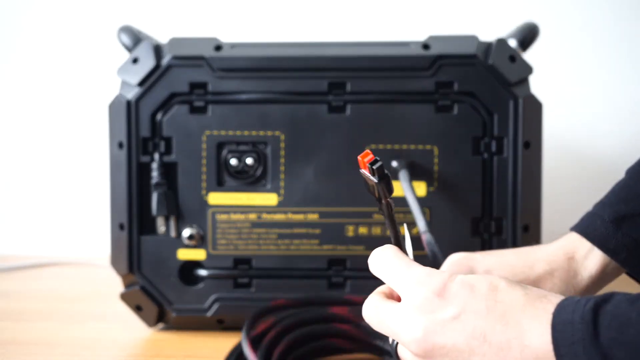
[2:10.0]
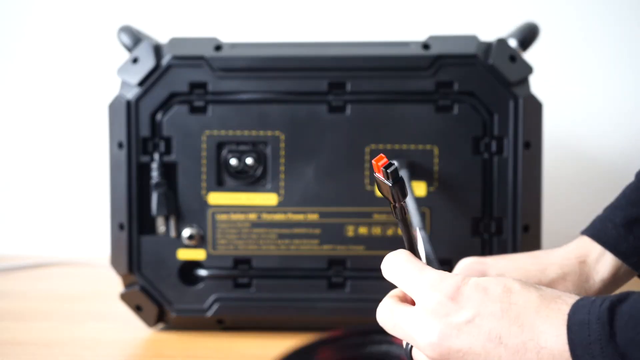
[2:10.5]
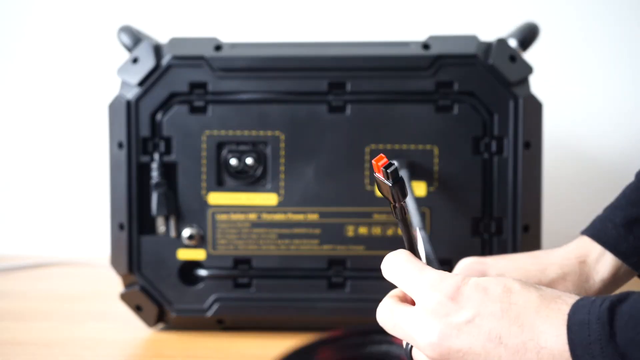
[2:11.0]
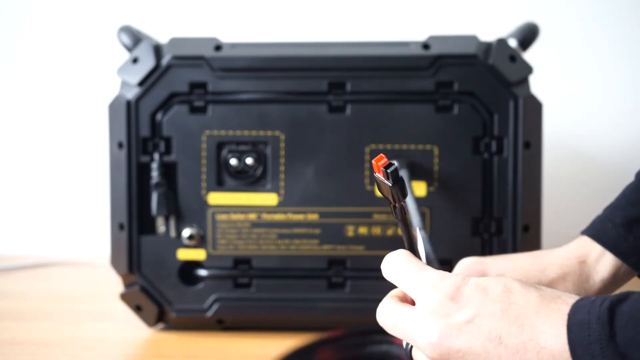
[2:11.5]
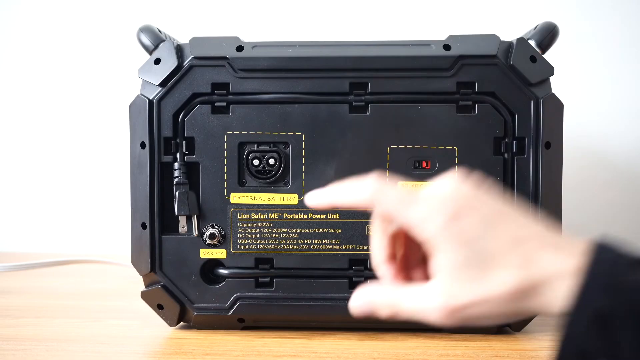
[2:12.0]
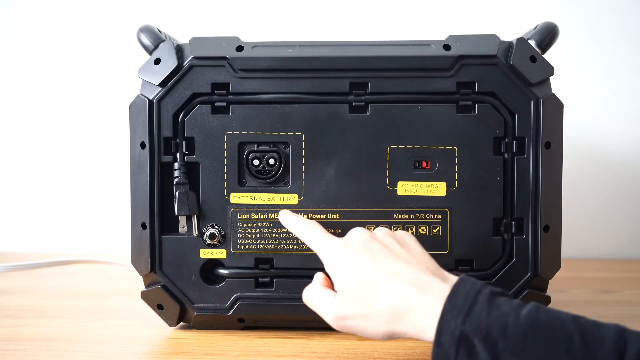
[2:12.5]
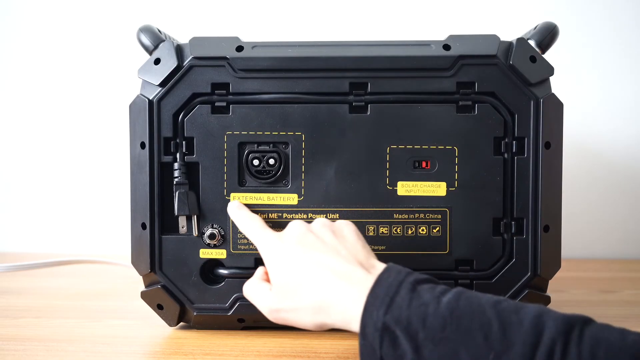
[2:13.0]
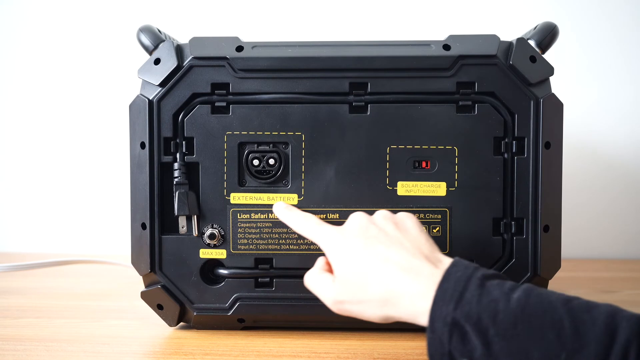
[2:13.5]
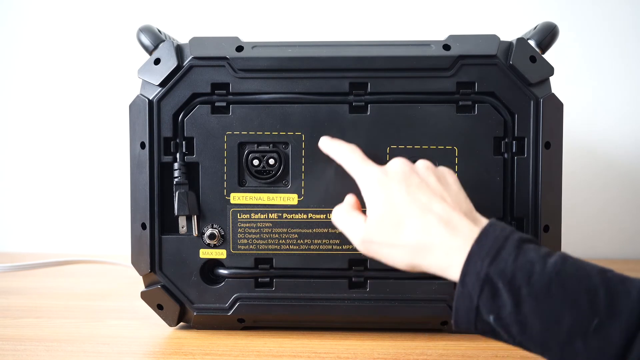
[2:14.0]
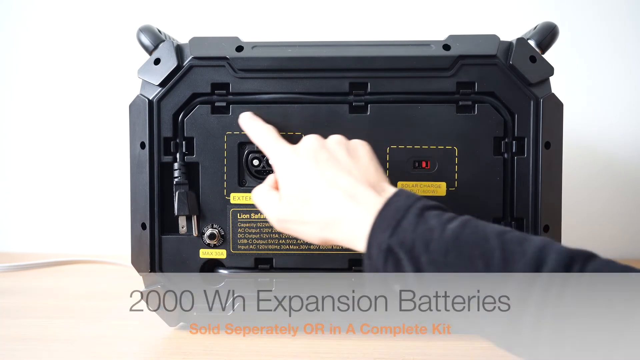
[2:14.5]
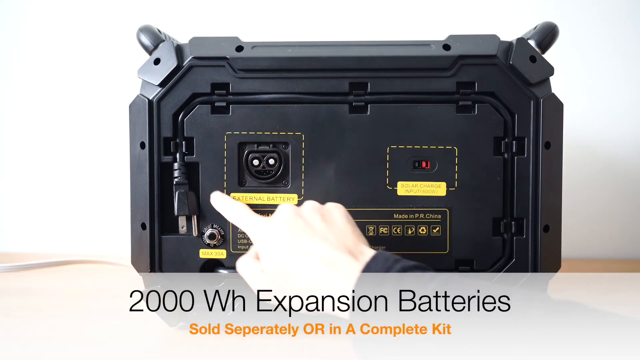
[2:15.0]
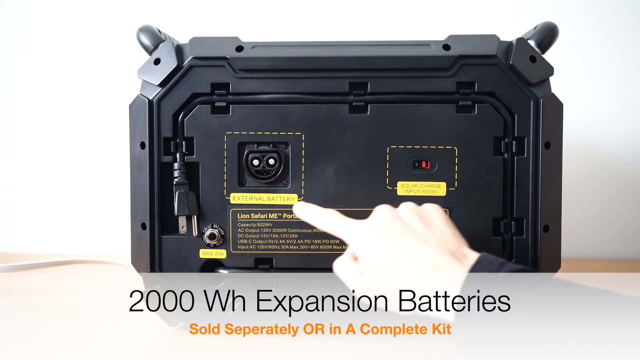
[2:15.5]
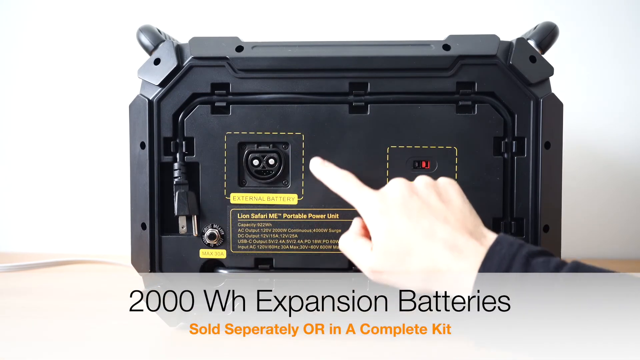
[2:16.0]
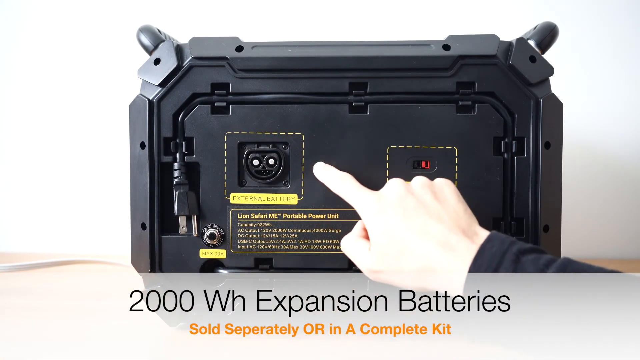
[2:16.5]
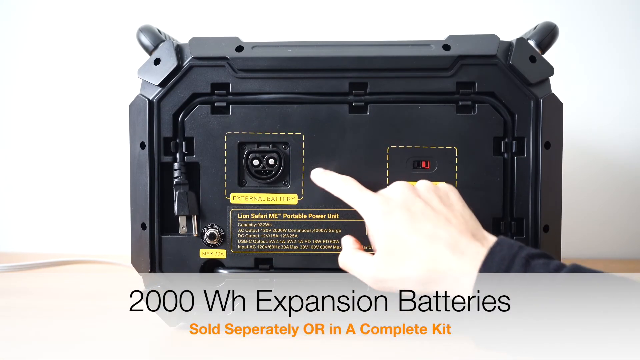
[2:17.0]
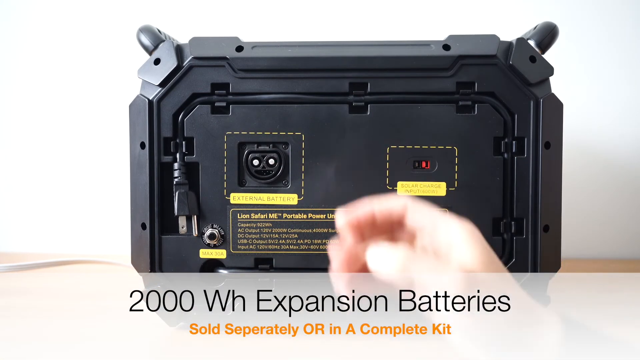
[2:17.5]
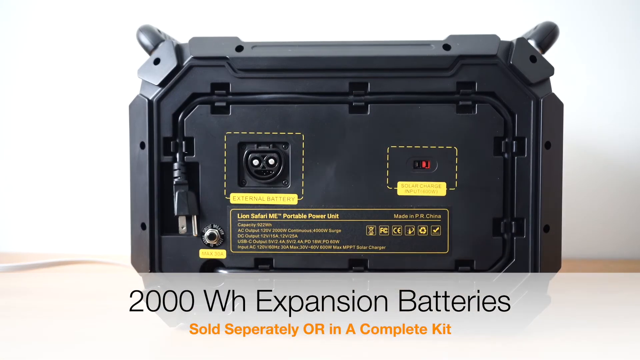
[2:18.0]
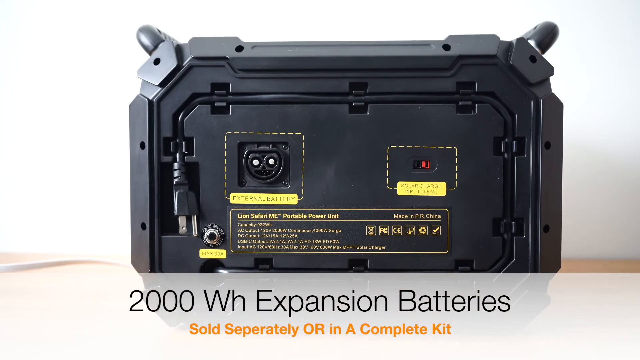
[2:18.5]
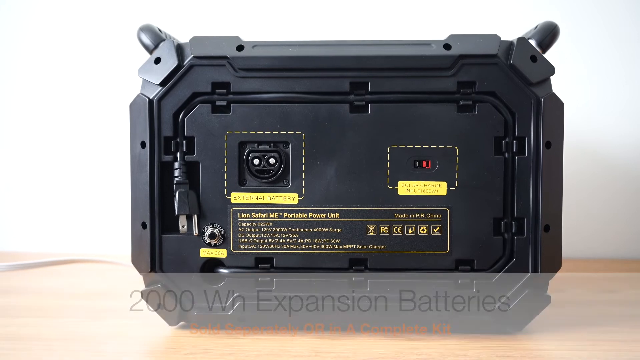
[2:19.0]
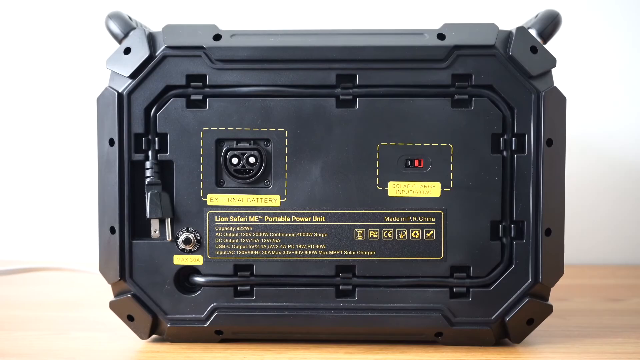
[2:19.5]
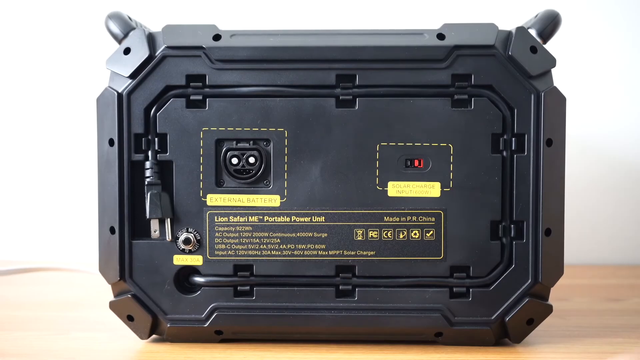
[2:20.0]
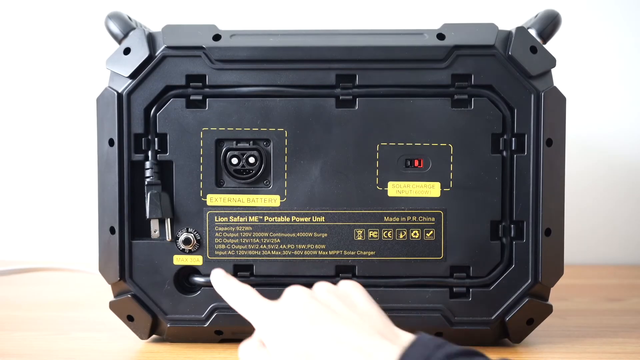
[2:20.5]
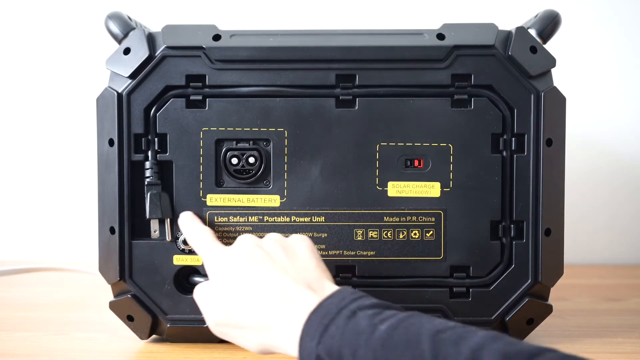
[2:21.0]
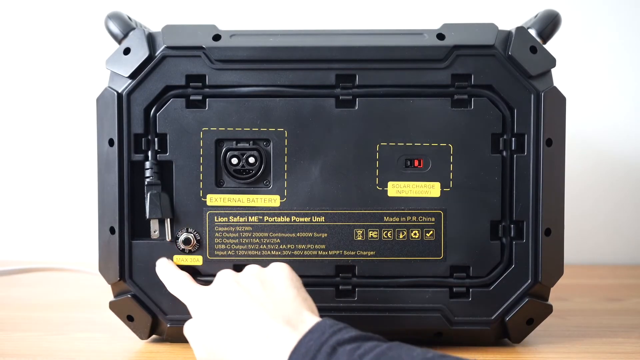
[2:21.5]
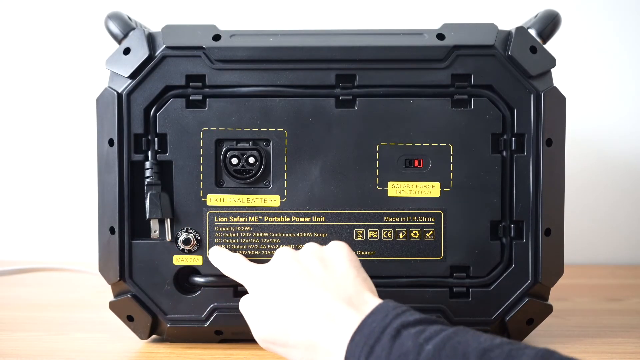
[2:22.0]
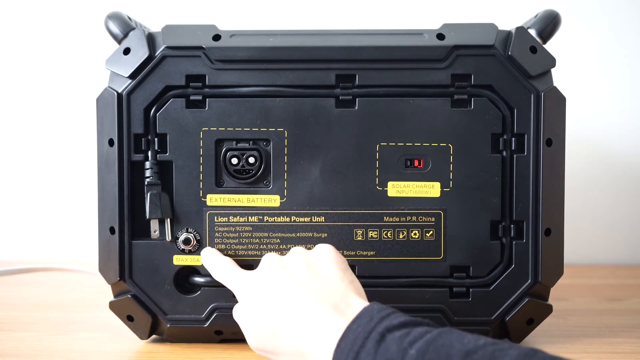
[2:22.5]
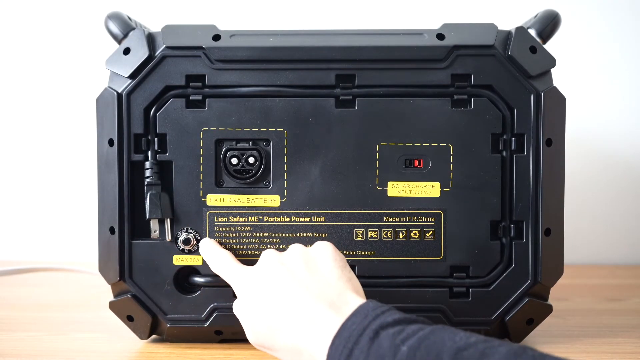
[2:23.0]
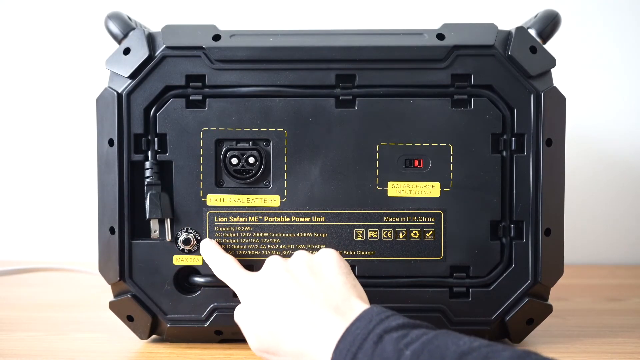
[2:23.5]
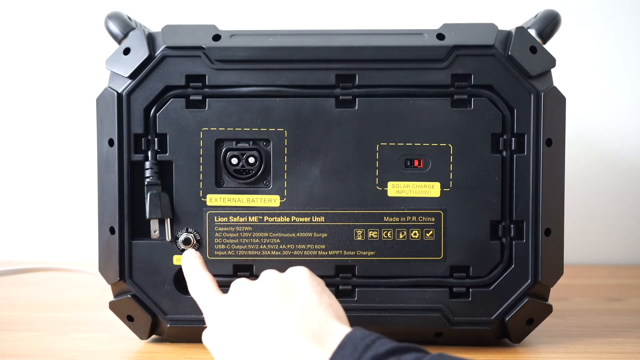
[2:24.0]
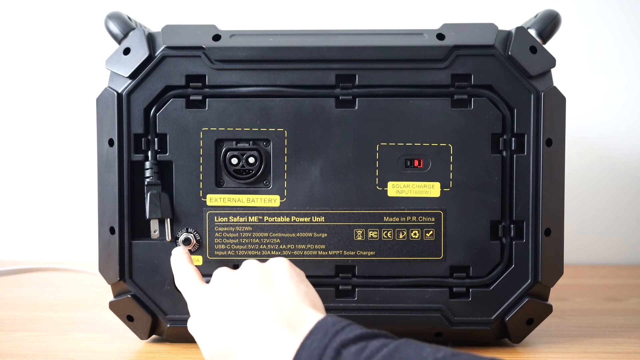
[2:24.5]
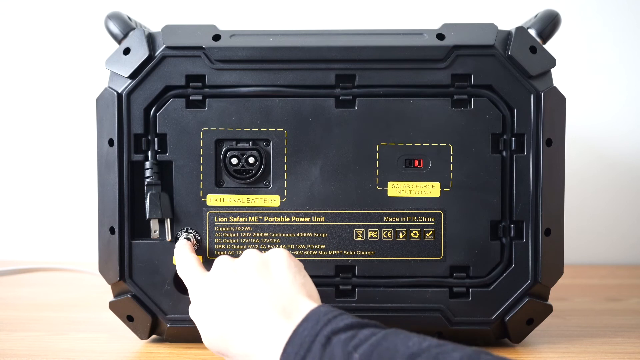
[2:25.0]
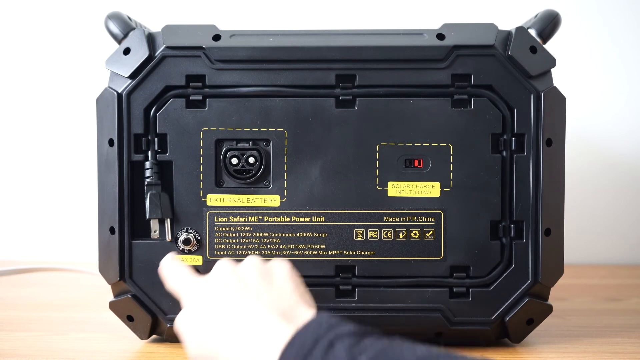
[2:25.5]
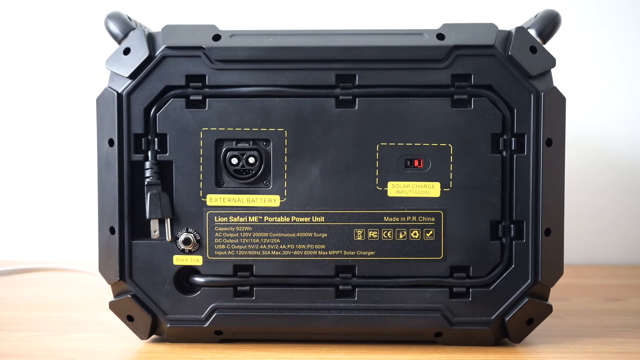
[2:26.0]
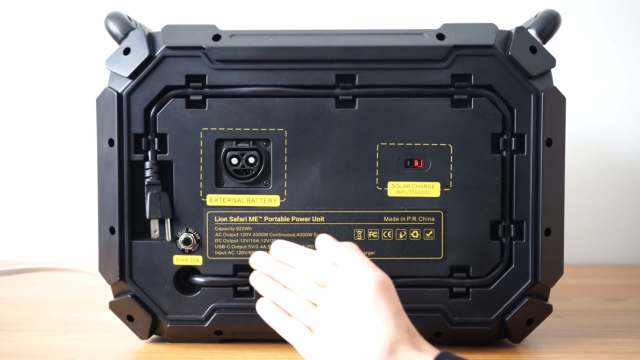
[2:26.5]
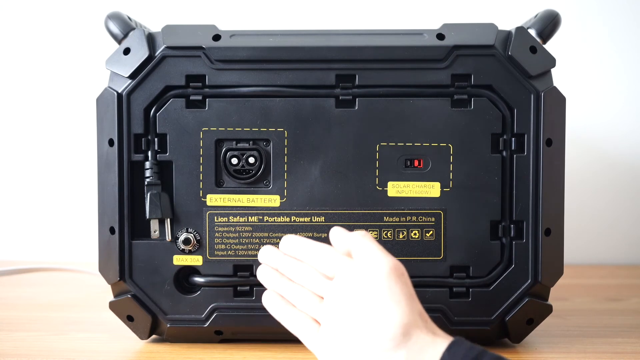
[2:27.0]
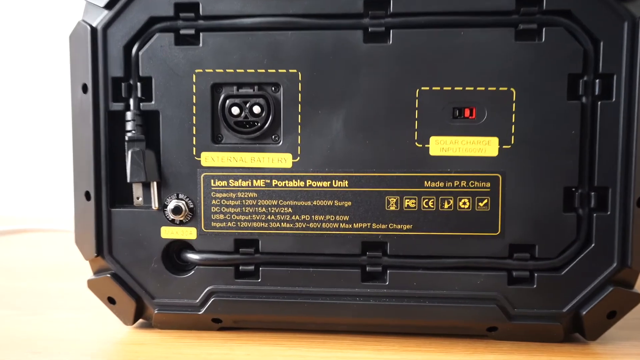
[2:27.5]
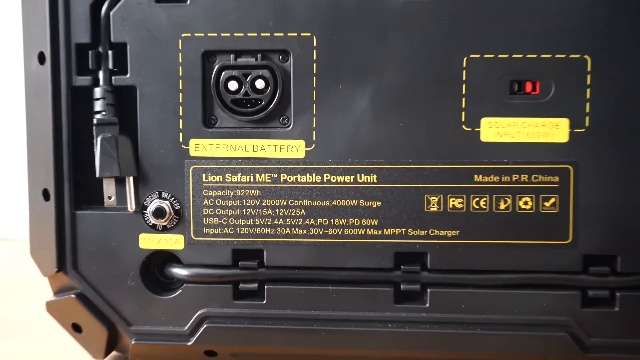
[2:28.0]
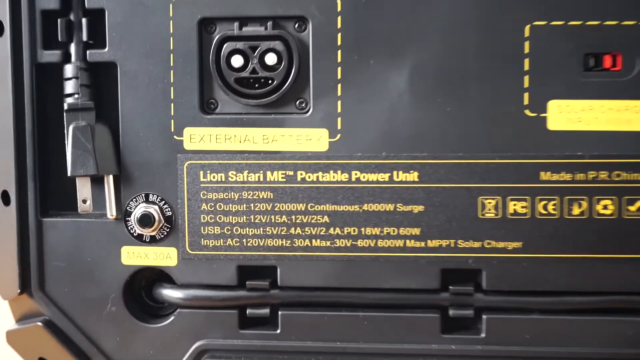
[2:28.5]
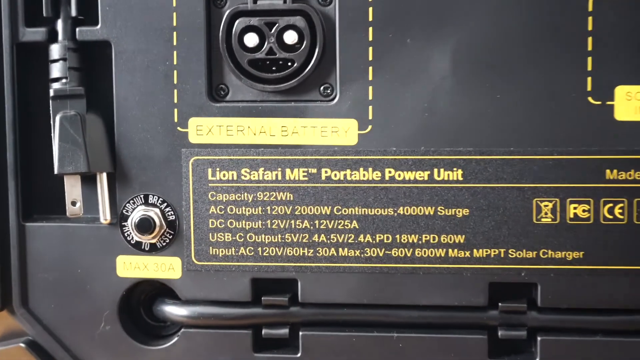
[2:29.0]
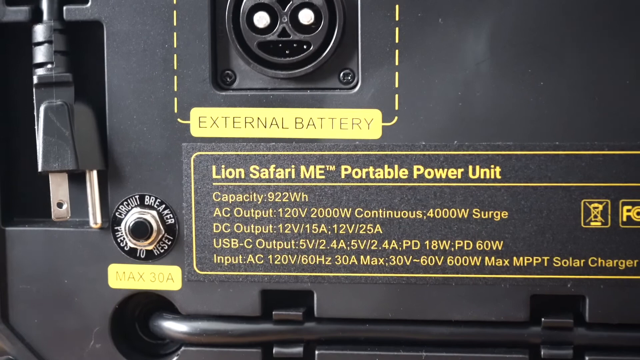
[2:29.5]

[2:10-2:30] A man's hand holds a black cable with what seems to be a red or orange tip next to a machine. The video transitions to another shot of the cable wrapped up again. He points to the external battery section, beneath which is text with information about the machine: capacity, AC output, DC output, USB-C, and input AC. He moves his finger across the text that says "external battery" and then in a circular motion. A banner pops up that says "2000WH expansion batteries sold separately or in a complete kit." He seems to point to the machine, and then there is a somewhat closer view of the machine as he points toward one of the other settings, which says "max."